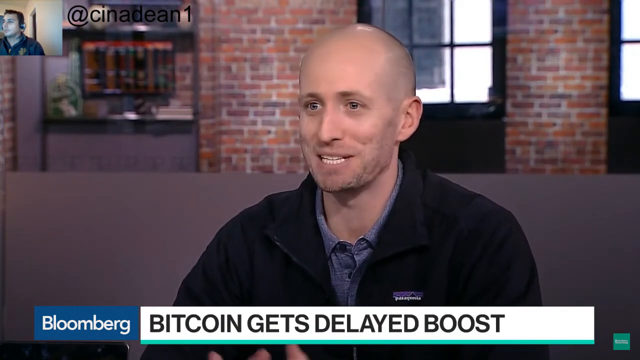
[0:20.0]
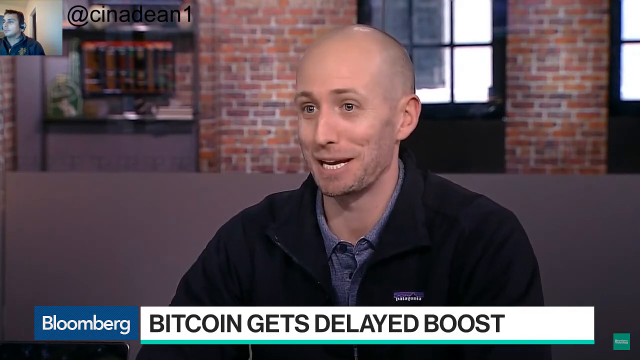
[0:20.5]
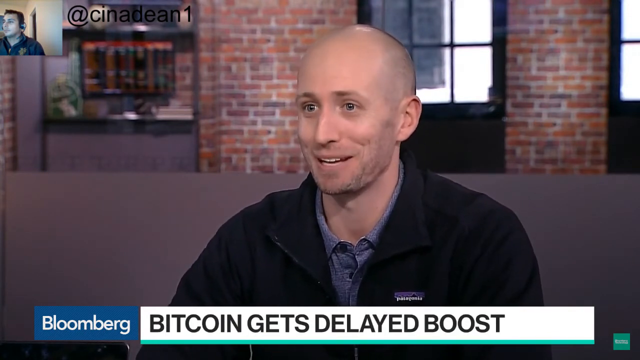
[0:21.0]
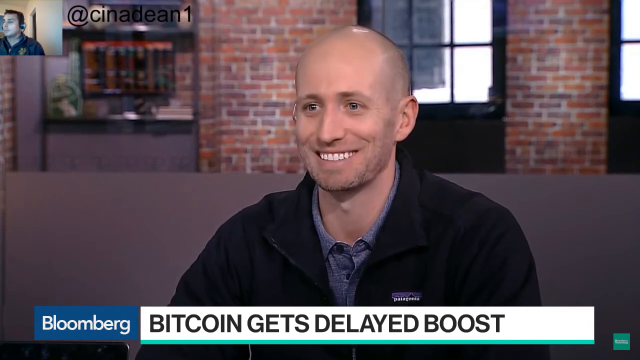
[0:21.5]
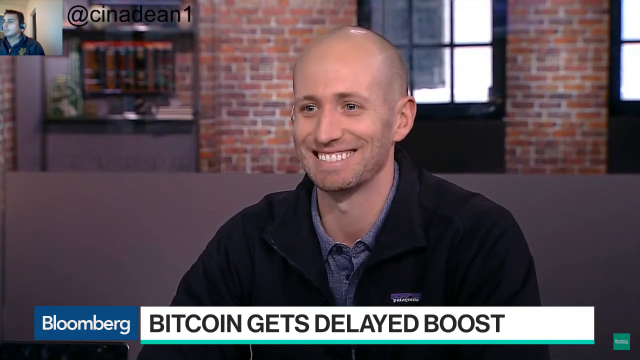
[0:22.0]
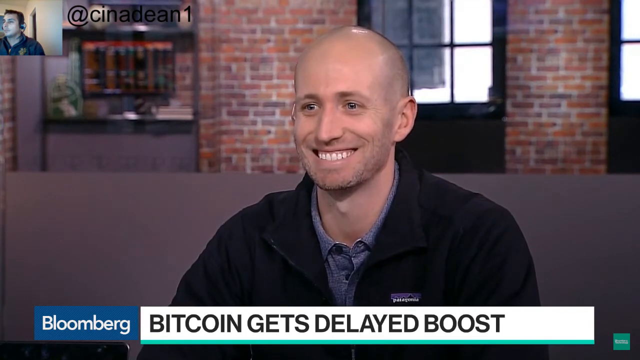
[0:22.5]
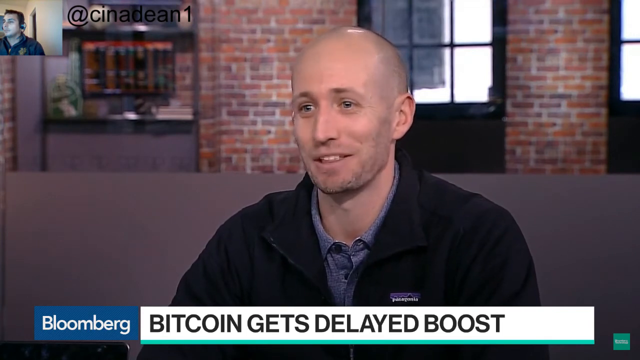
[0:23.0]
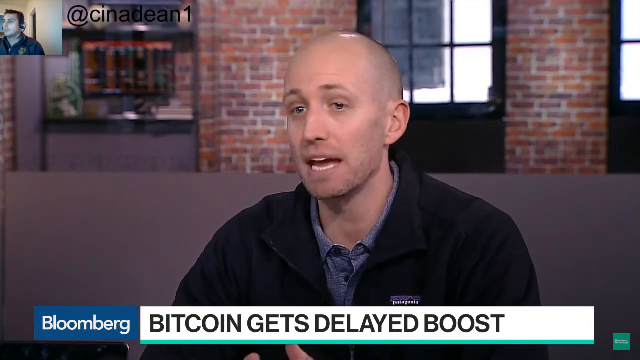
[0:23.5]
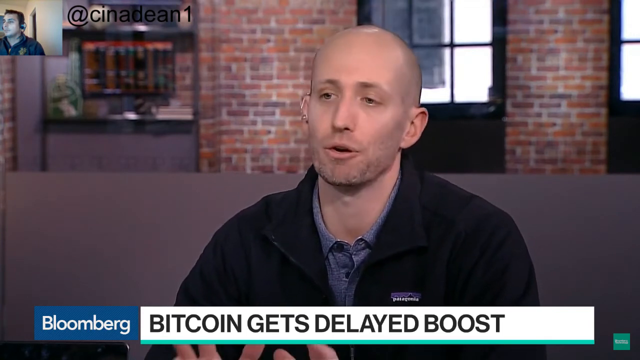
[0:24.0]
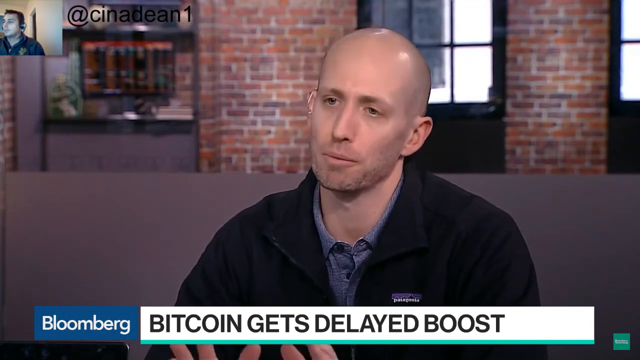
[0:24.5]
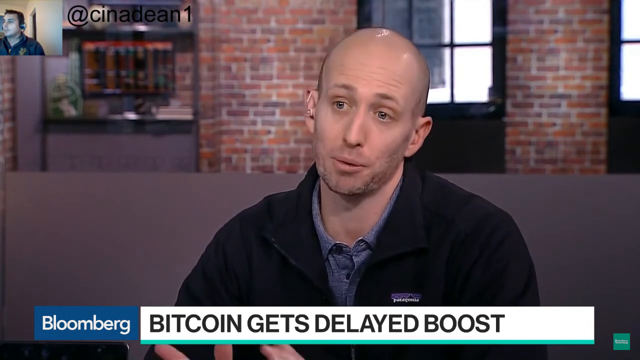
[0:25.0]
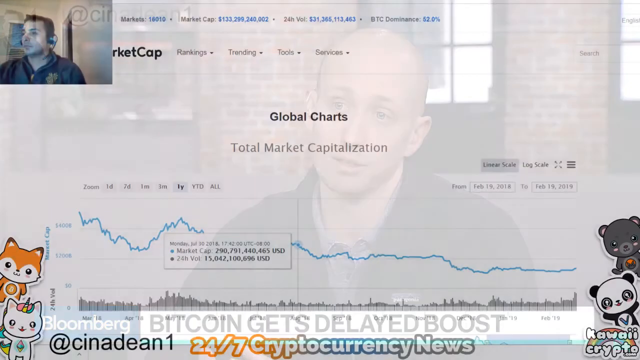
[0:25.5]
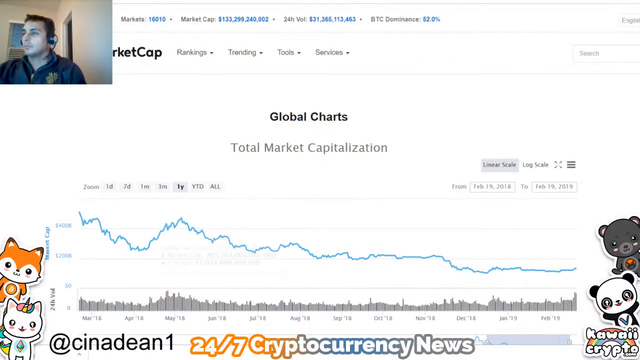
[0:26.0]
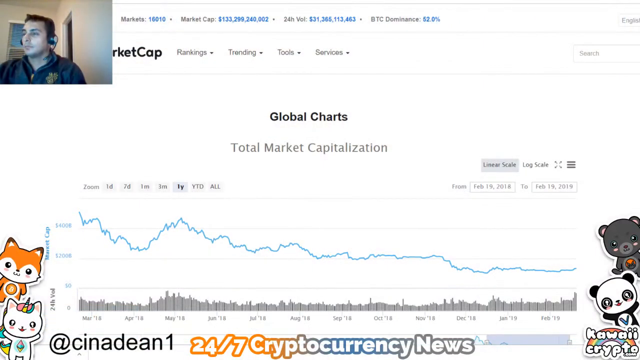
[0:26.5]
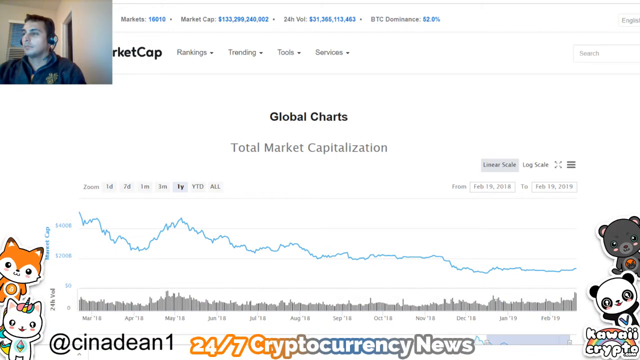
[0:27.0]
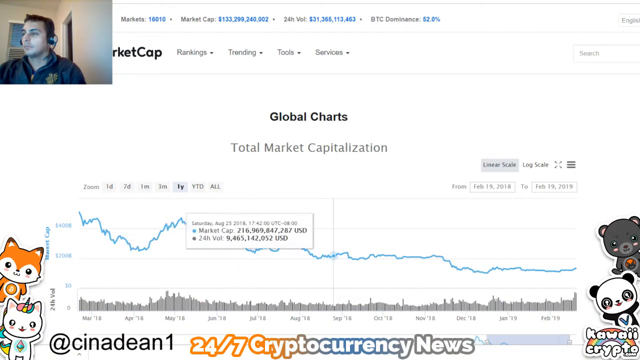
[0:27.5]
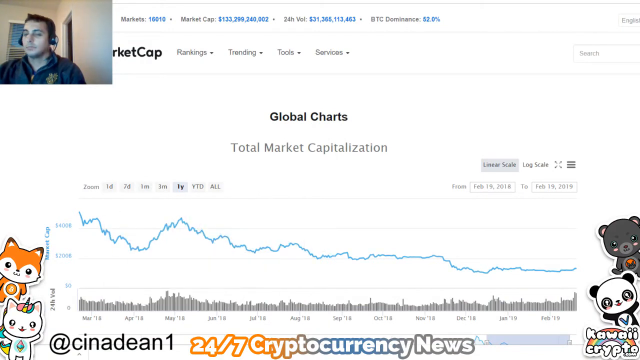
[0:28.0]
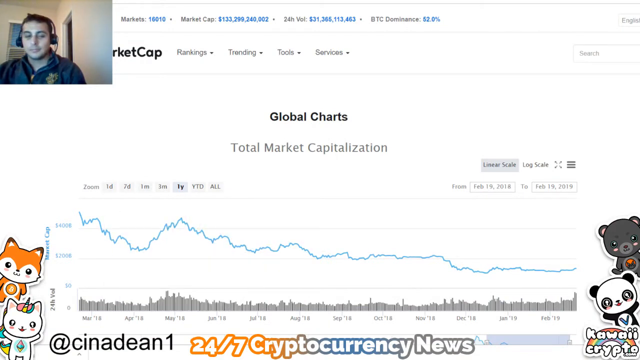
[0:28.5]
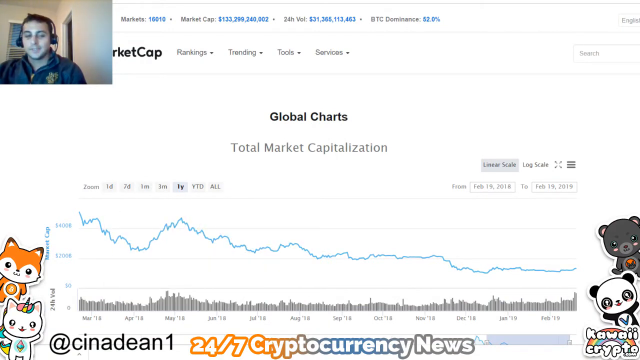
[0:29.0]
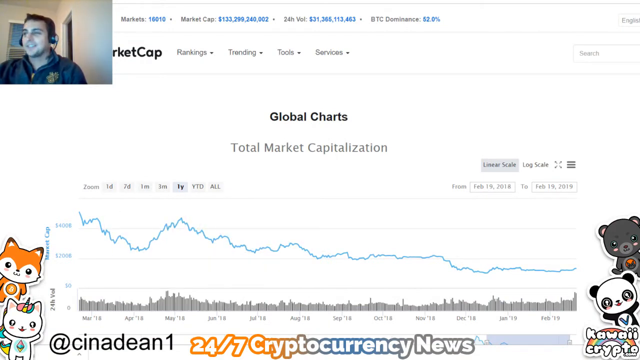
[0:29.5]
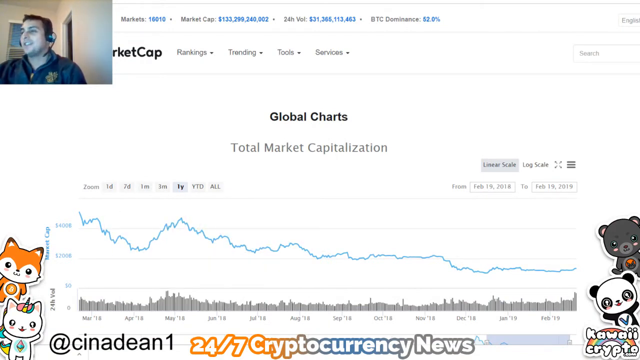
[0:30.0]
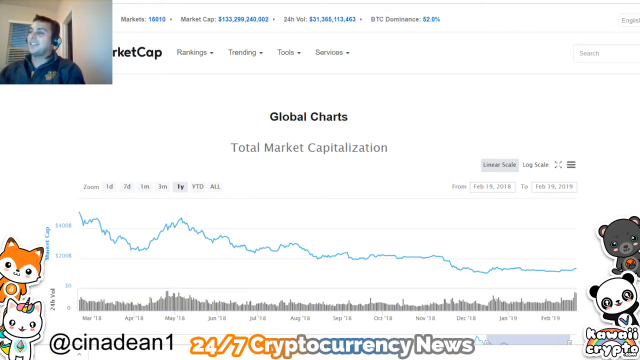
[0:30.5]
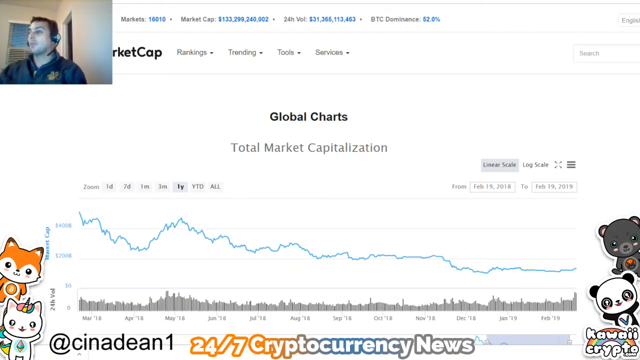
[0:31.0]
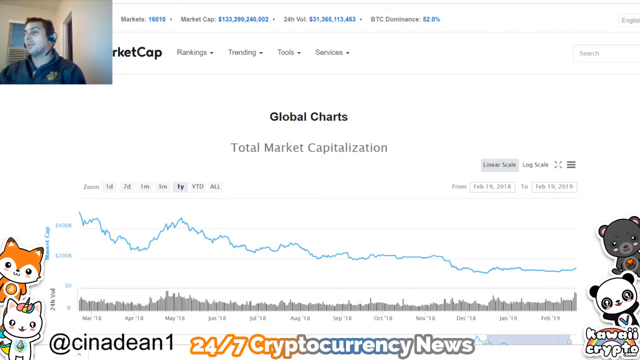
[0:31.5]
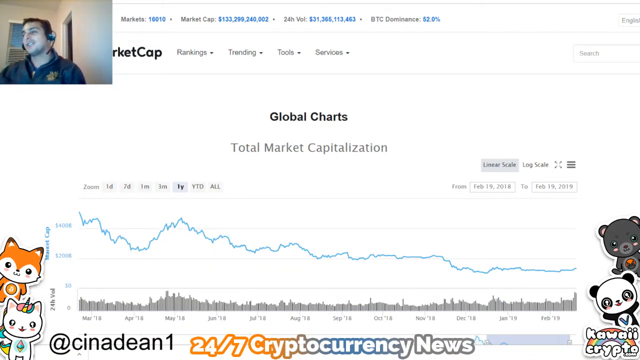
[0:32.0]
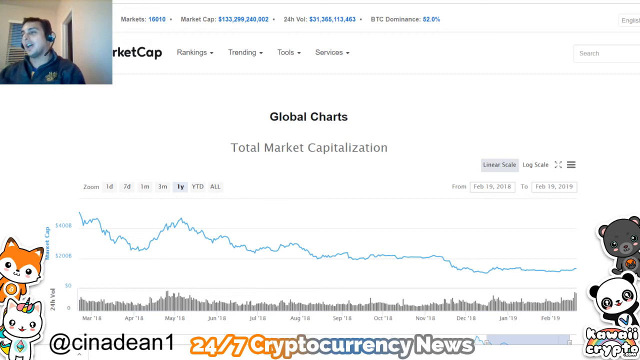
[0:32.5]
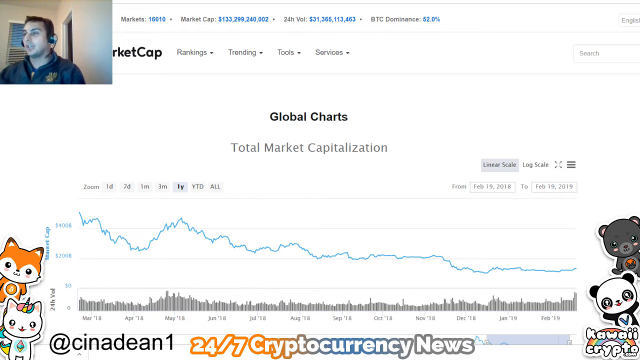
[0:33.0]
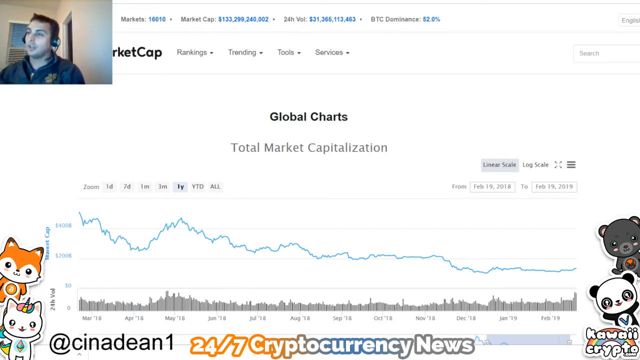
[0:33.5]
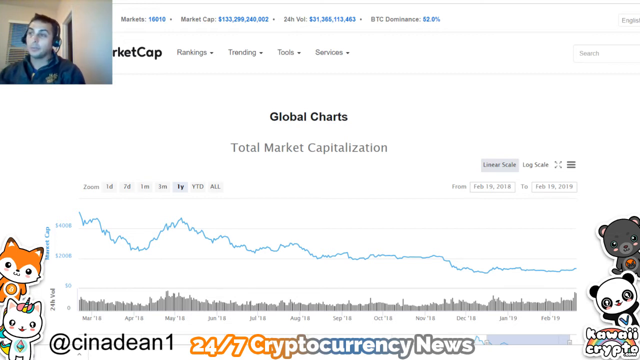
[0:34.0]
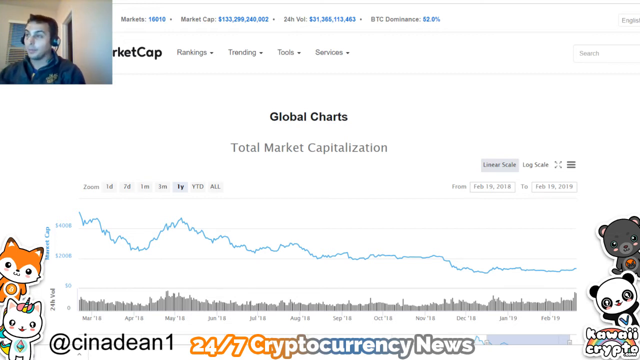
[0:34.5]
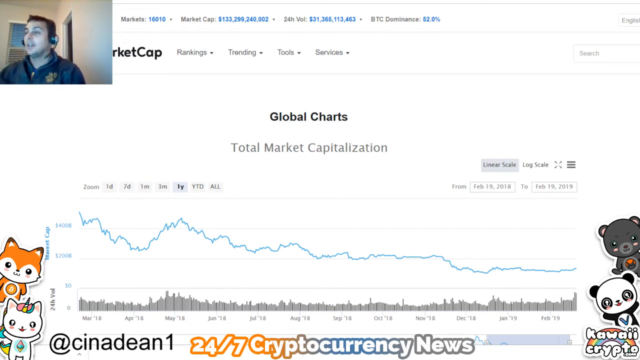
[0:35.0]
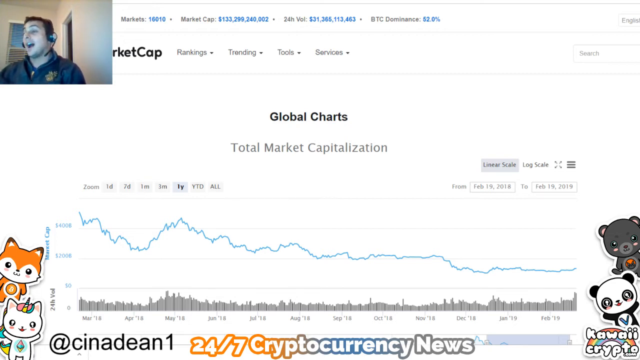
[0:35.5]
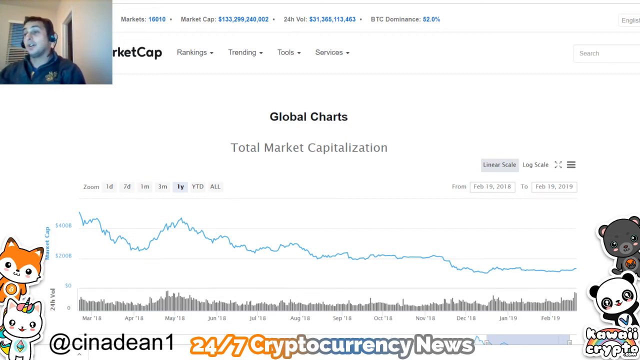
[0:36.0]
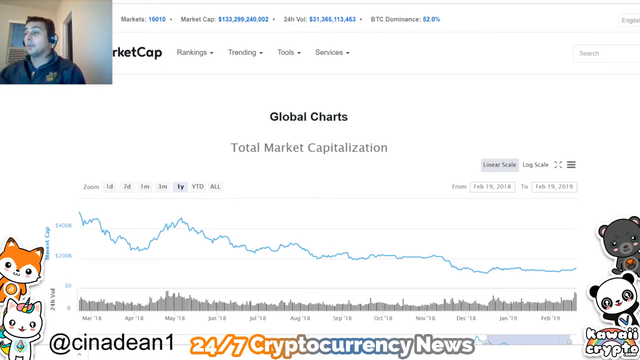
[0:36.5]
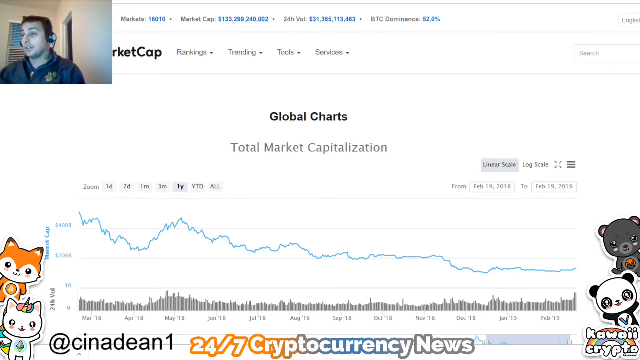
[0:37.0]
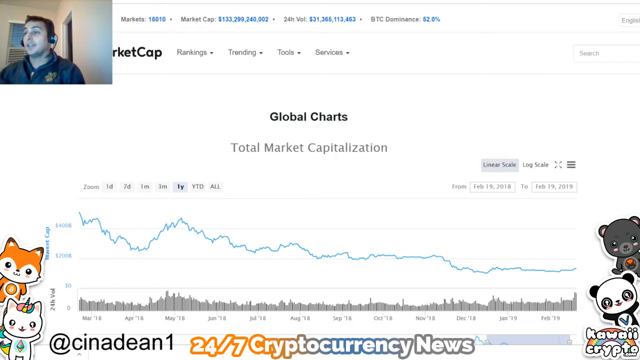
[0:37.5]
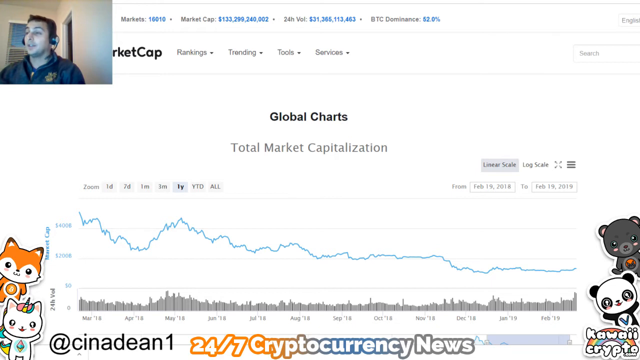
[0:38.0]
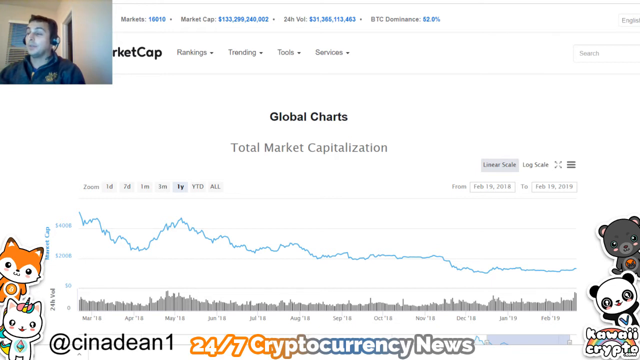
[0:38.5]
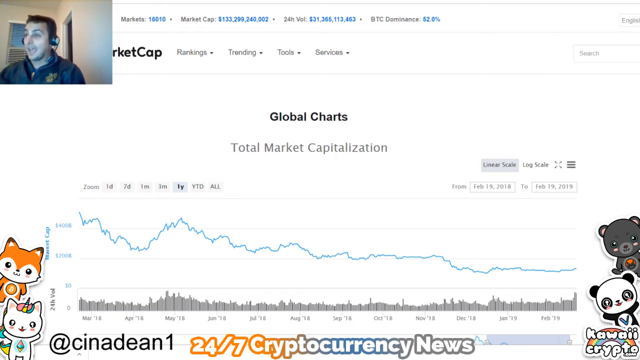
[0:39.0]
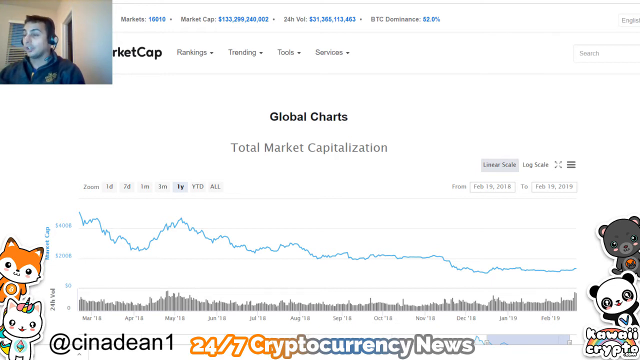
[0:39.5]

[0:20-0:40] The bald man changes facial expressions rapidly, showing his big, shining white teeth. The headline reads "bitcoin gets delayed boost". The video then switches to a screen recording of a site showing the market cap, "global charts" and "total market capitalization" of the crypto market. A webcam of the man talking appears at the top left; he wears a headset and seems to have a jacket on. The footage is from Bloomberg News.